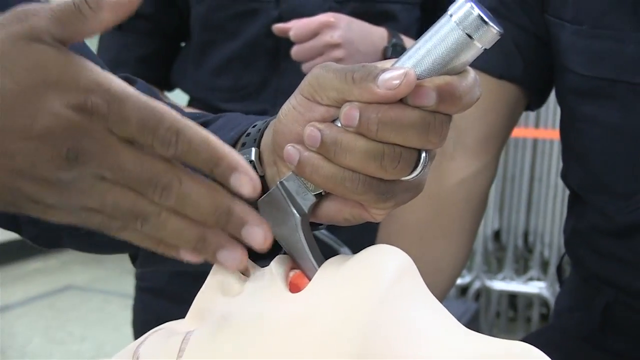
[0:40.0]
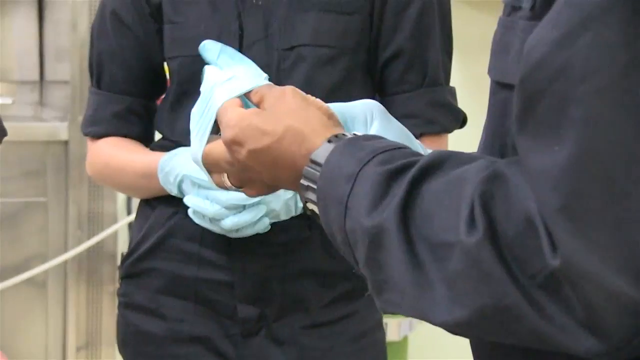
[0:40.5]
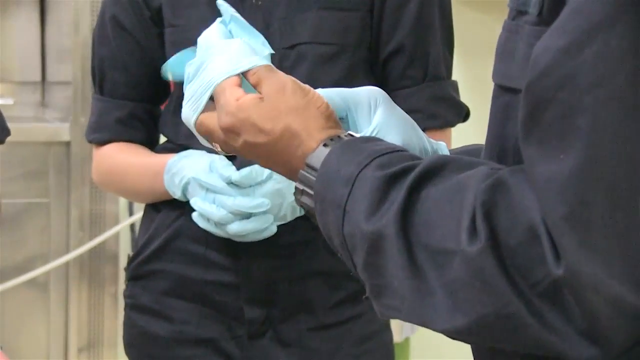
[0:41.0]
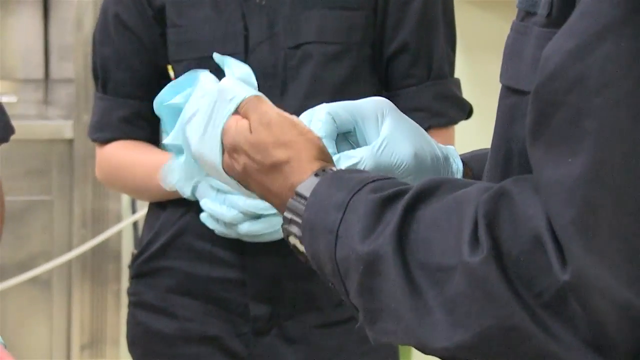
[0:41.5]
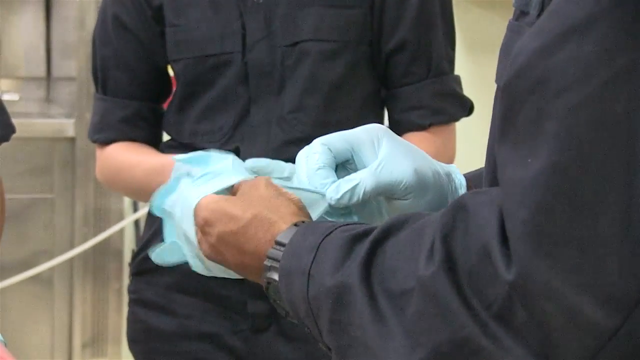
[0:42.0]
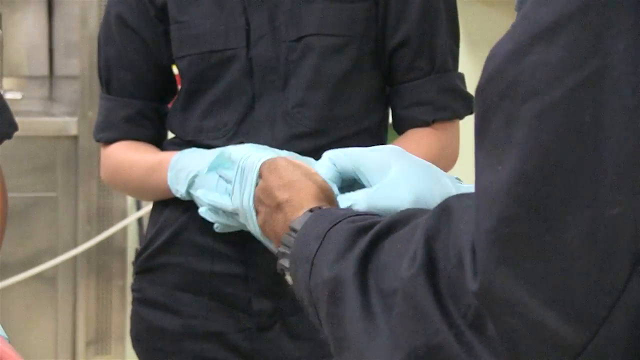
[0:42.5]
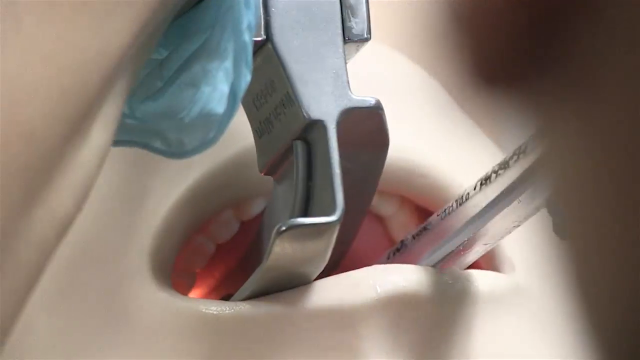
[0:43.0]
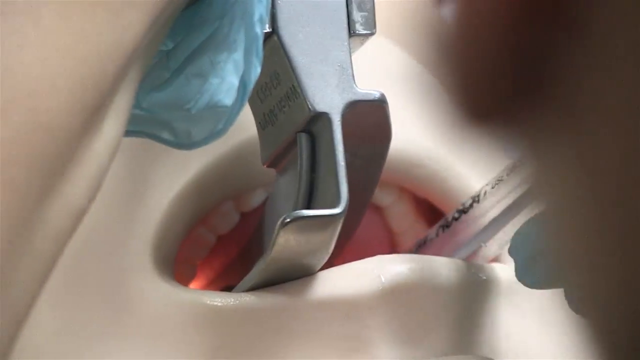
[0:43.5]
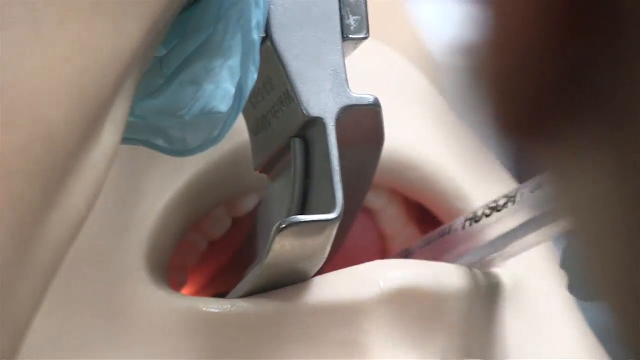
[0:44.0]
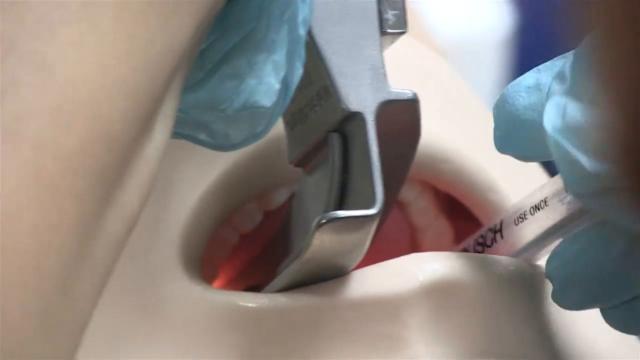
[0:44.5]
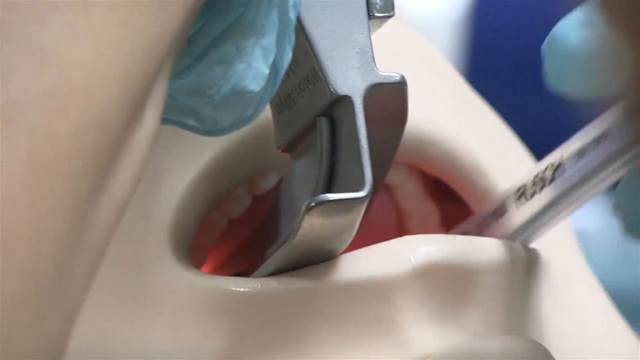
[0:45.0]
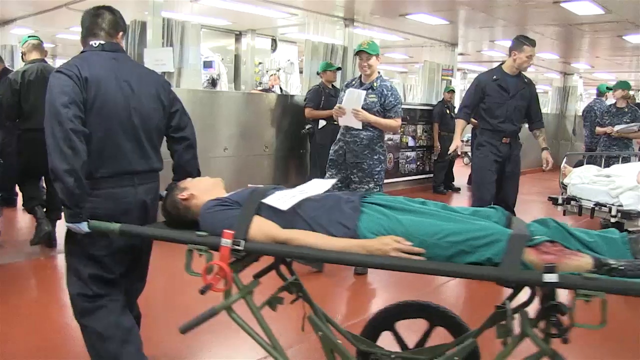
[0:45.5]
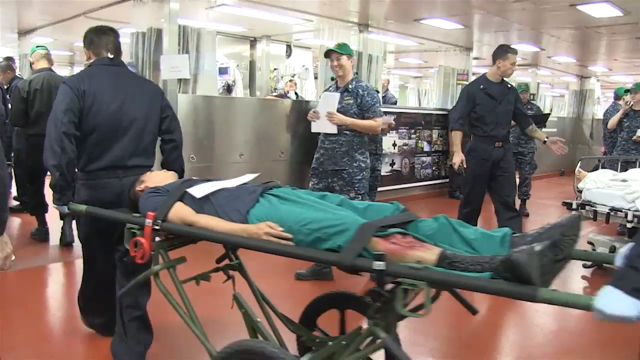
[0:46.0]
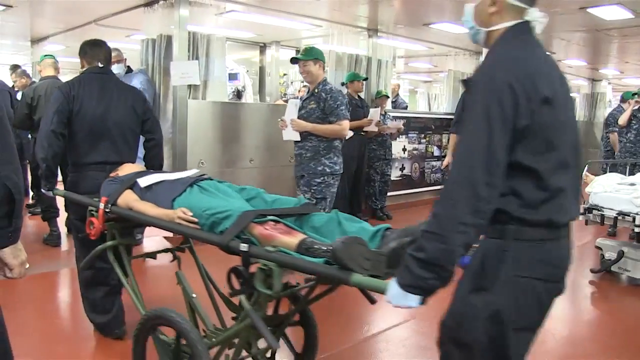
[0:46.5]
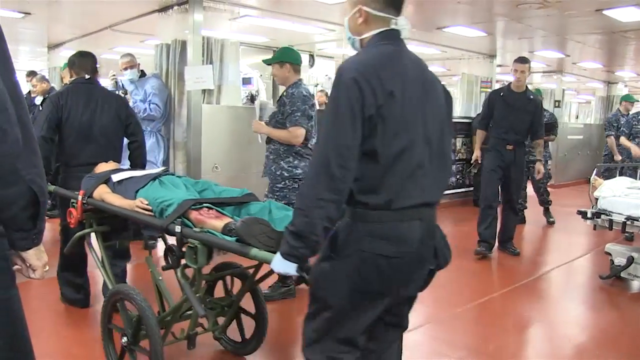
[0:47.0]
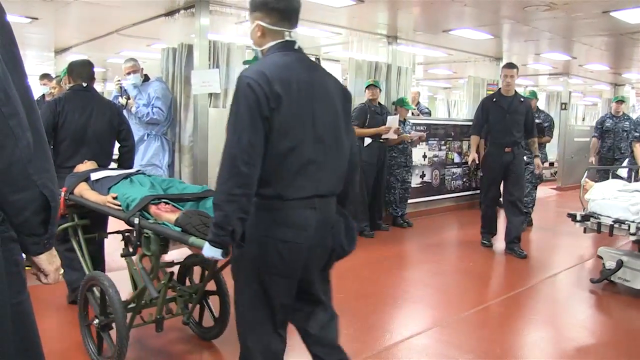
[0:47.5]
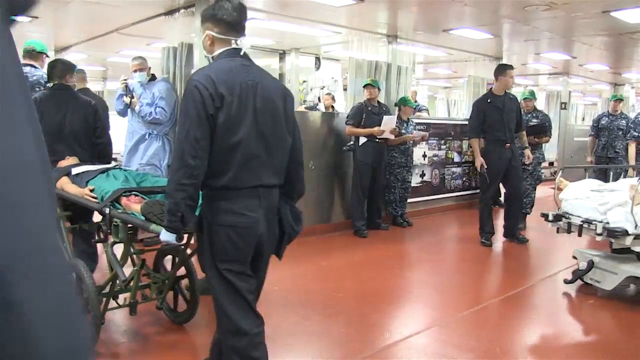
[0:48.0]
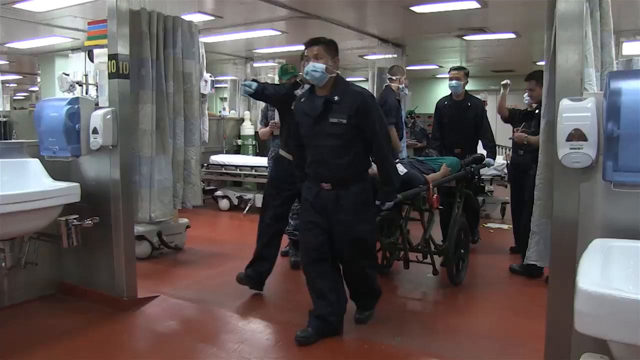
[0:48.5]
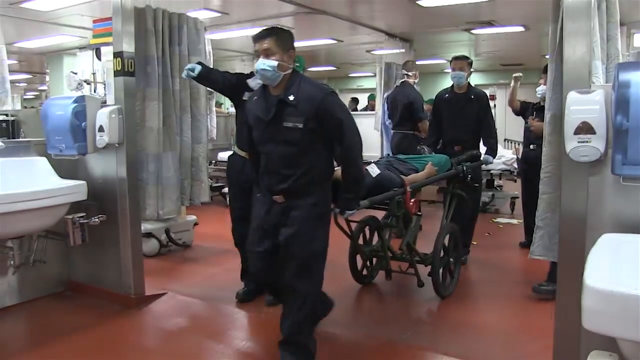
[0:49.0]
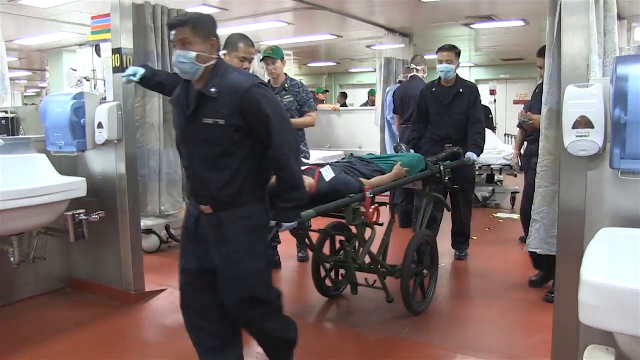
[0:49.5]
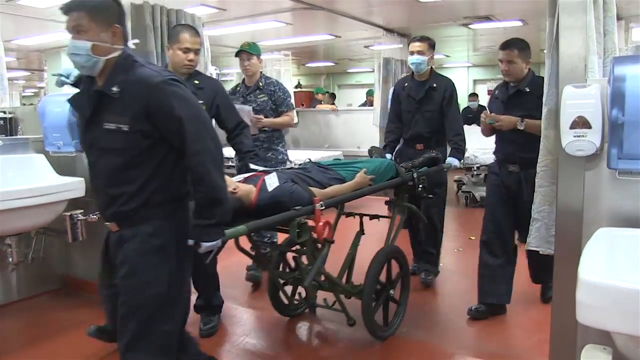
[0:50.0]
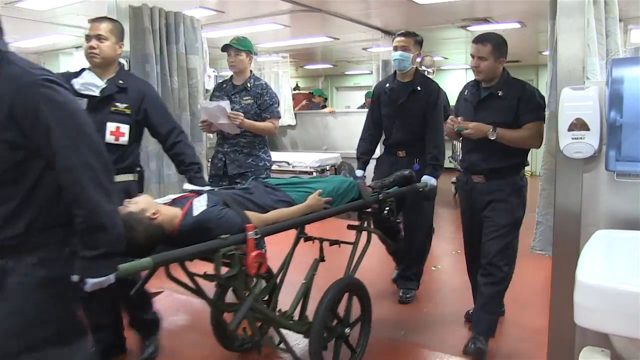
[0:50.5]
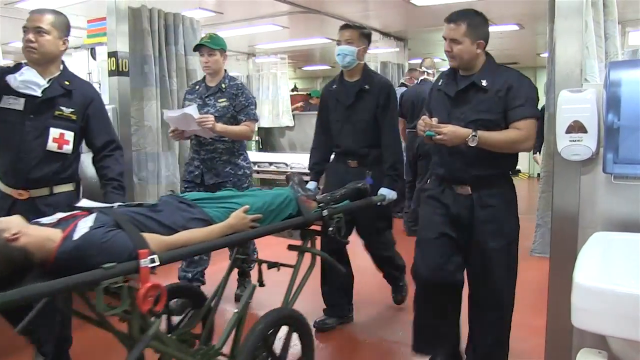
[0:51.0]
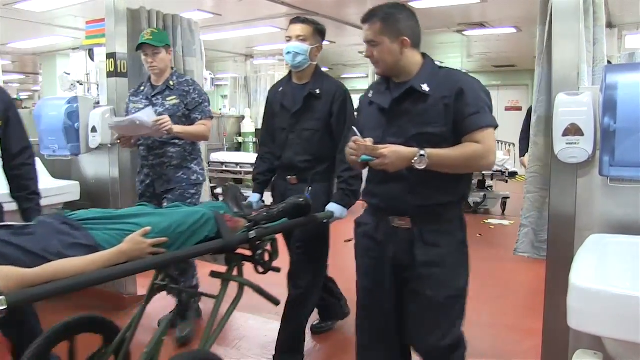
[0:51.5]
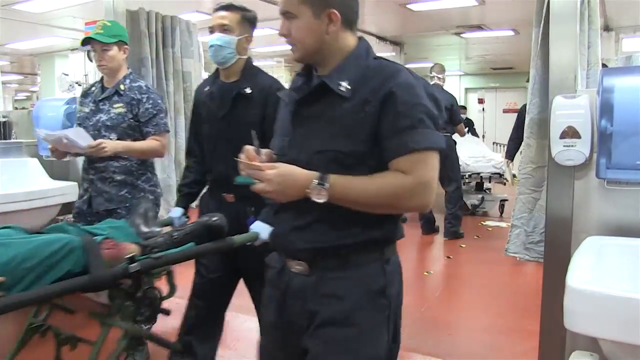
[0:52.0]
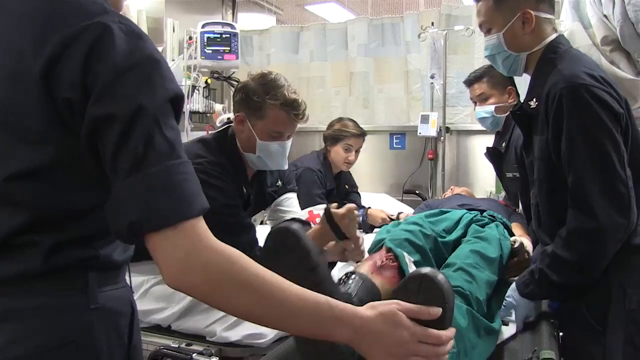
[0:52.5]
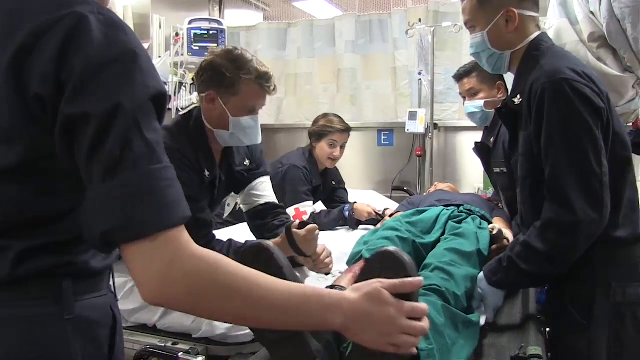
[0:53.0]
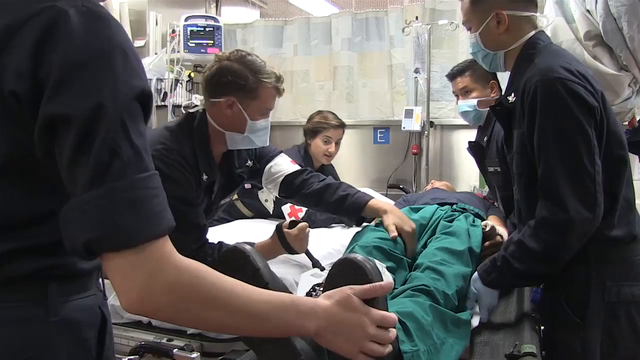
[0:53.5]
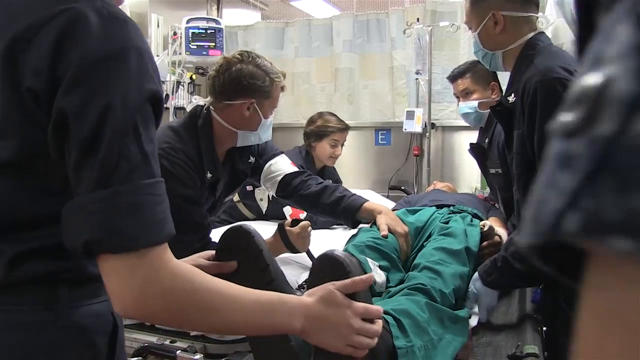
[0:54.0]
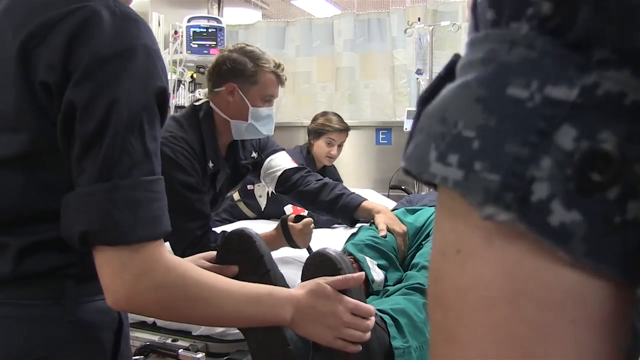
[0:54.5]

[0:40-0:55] Cortez Brown holds the claw underneath the dummy's bottom jaw, kind of opening it up, possibly to get the airway open for intubation. A person puts gloves on and then puts a tube down what is apparently the throat of the doll or dummy. A patient is lifted onto a gurney; his leg is injured, and it looks like flesh has been removed and the bone is showing. It looks like an emergency case. Another person is on a different gurney; the man looks like he might be out or unconscious and is not really moving as they lift him off the gurney onto the bed.